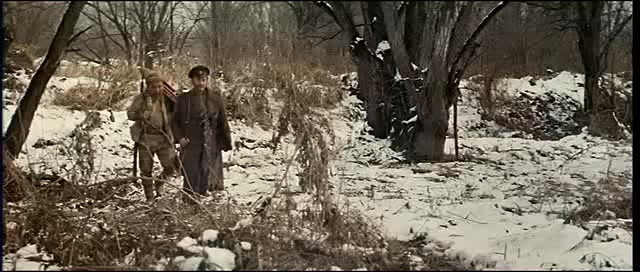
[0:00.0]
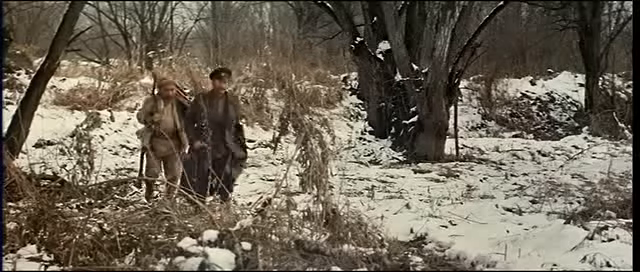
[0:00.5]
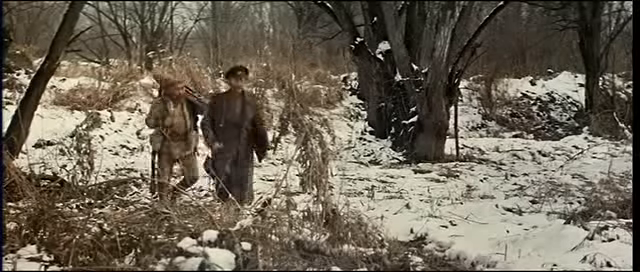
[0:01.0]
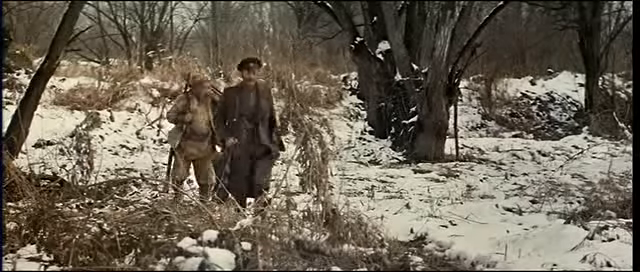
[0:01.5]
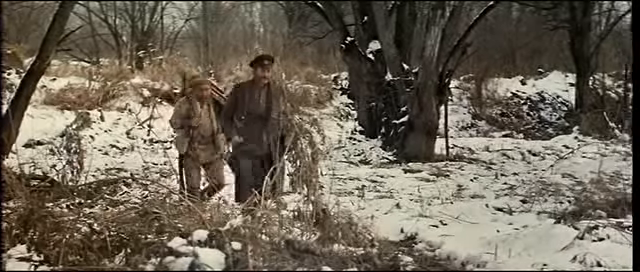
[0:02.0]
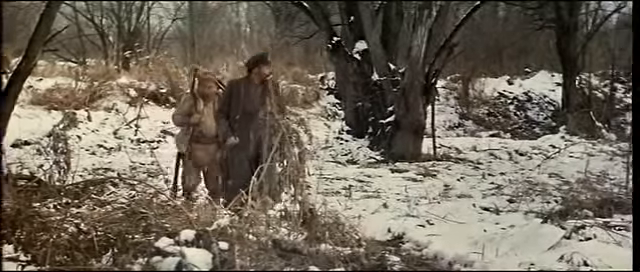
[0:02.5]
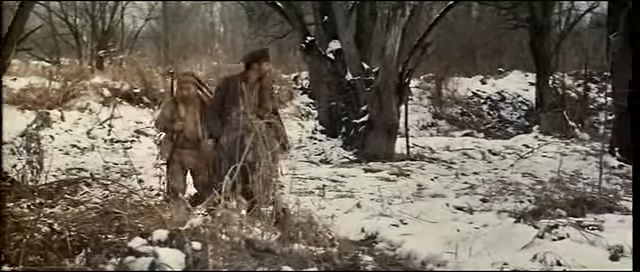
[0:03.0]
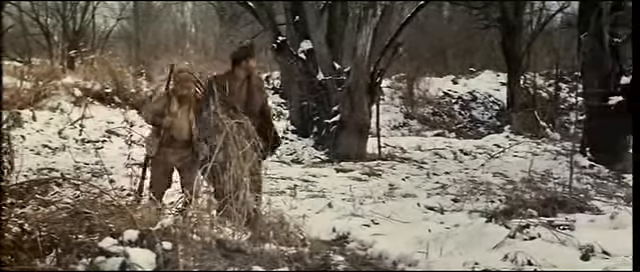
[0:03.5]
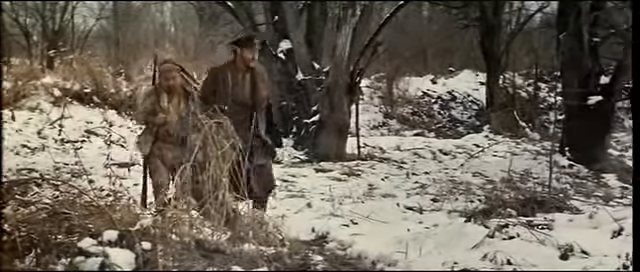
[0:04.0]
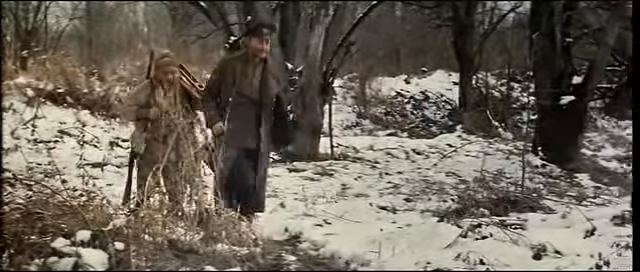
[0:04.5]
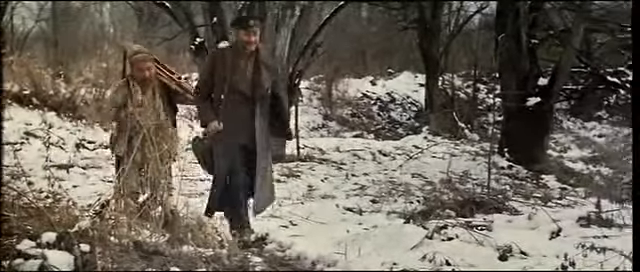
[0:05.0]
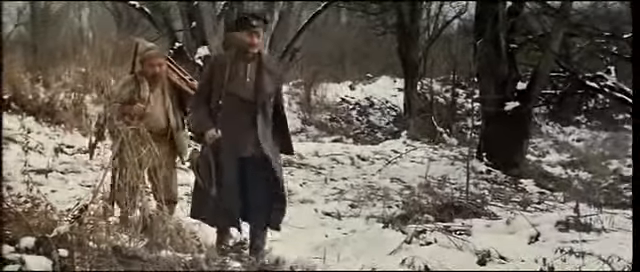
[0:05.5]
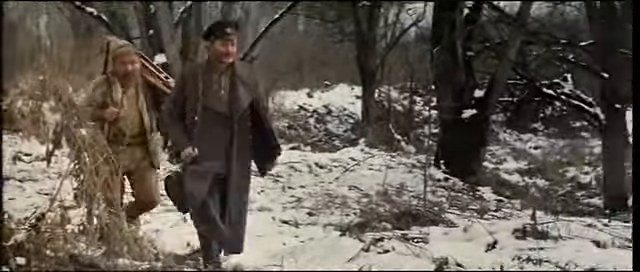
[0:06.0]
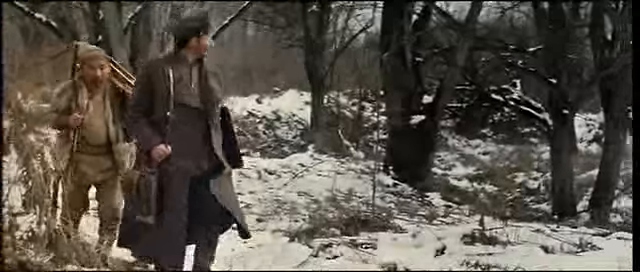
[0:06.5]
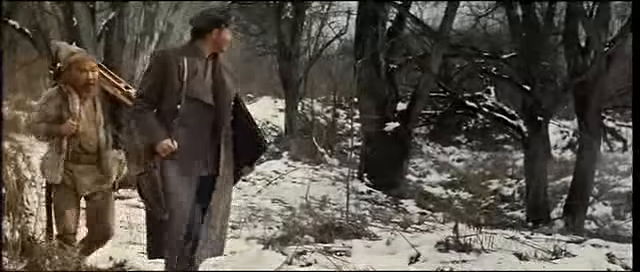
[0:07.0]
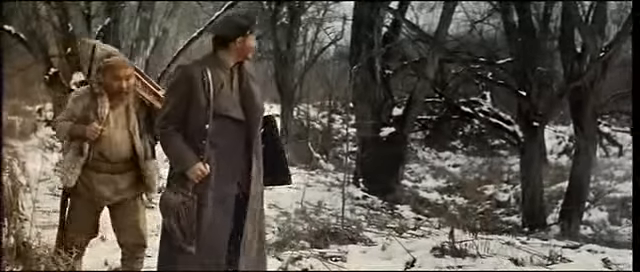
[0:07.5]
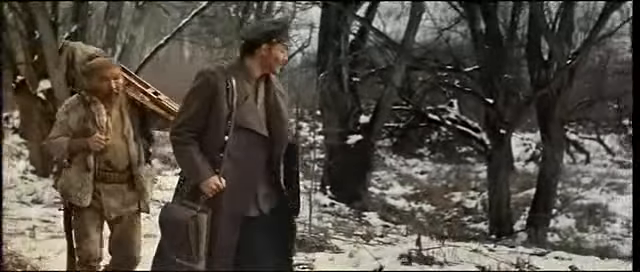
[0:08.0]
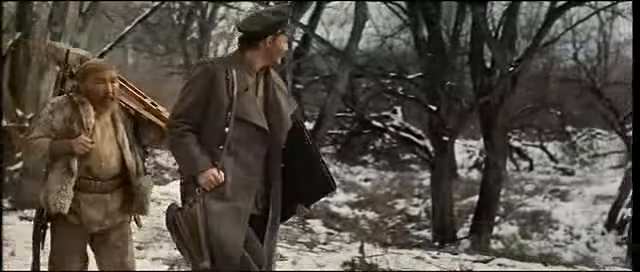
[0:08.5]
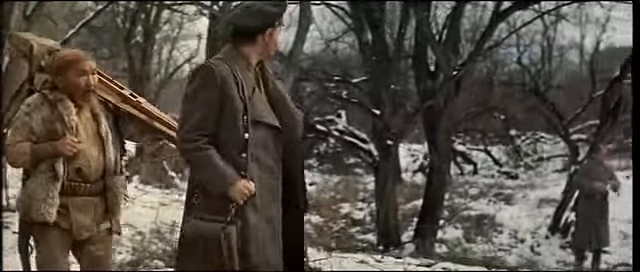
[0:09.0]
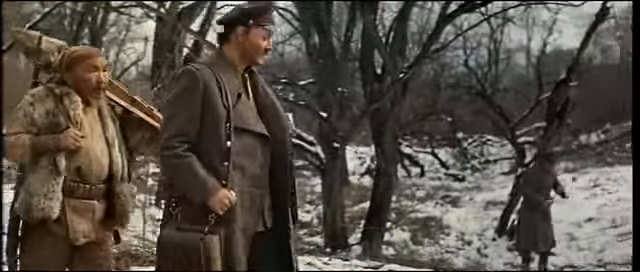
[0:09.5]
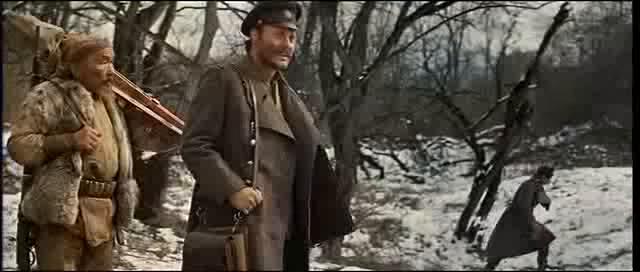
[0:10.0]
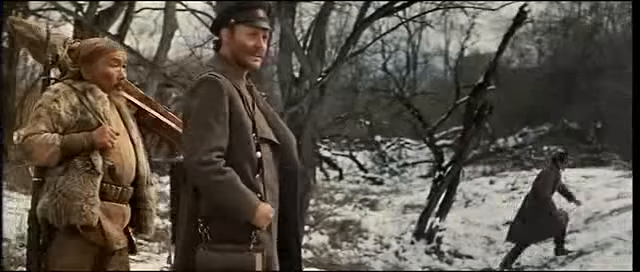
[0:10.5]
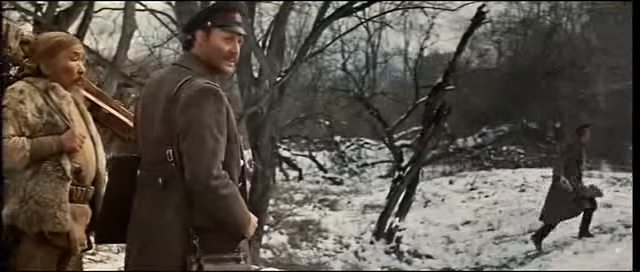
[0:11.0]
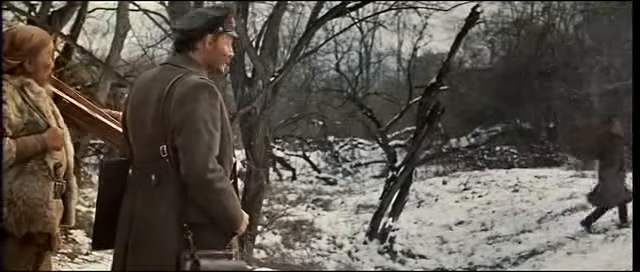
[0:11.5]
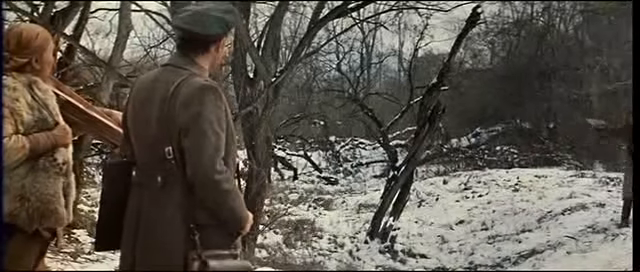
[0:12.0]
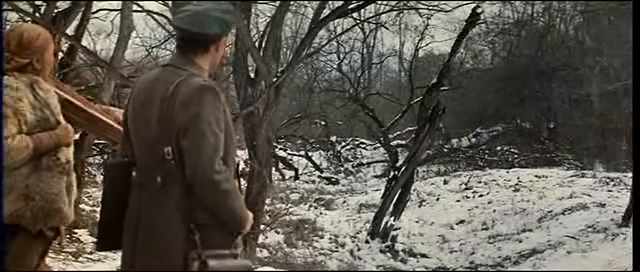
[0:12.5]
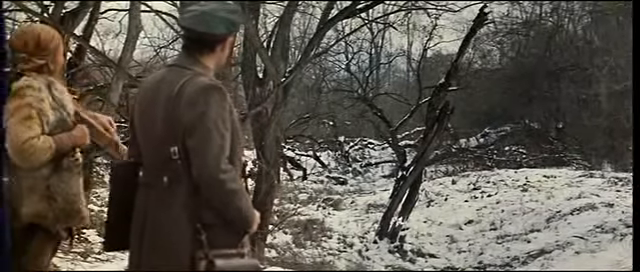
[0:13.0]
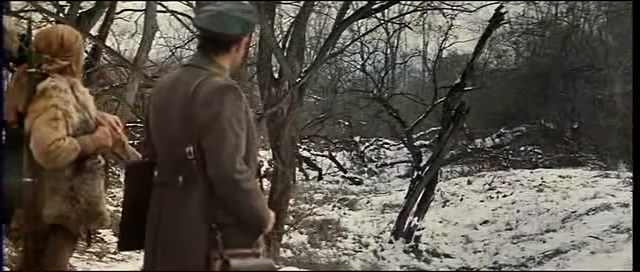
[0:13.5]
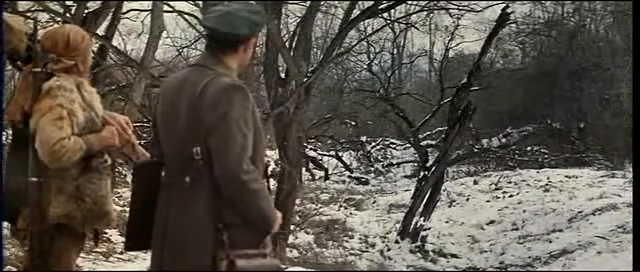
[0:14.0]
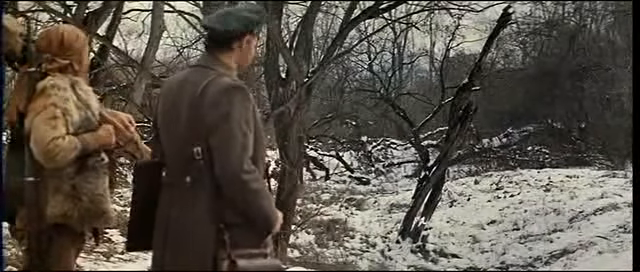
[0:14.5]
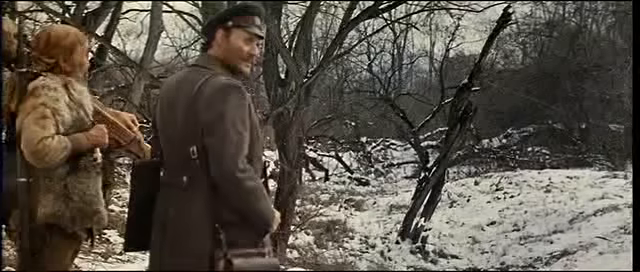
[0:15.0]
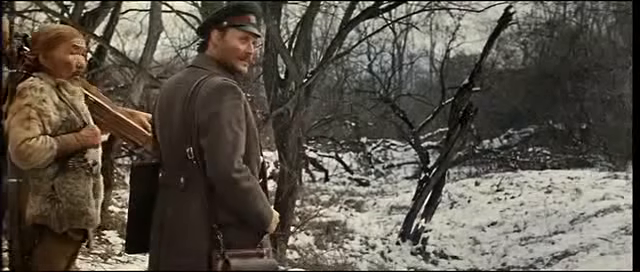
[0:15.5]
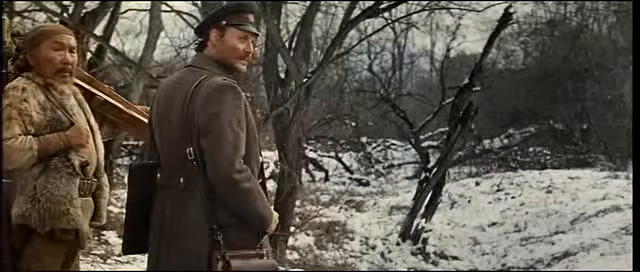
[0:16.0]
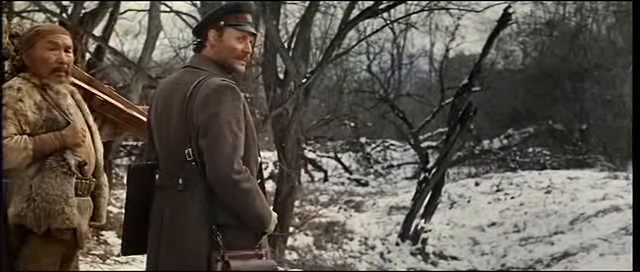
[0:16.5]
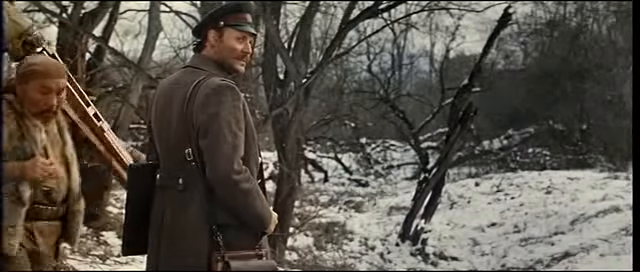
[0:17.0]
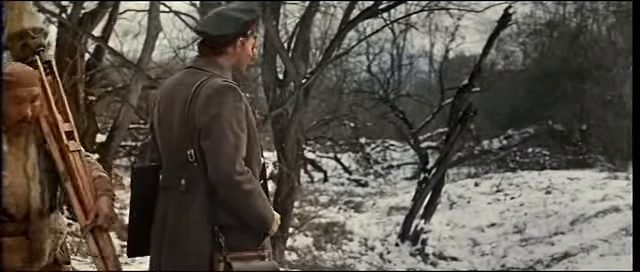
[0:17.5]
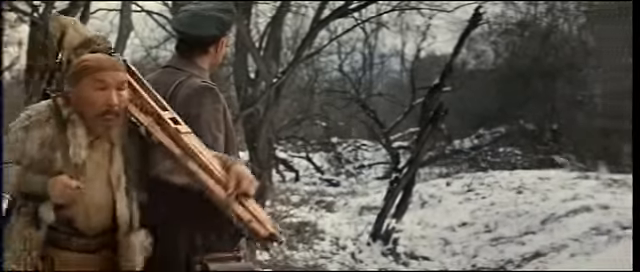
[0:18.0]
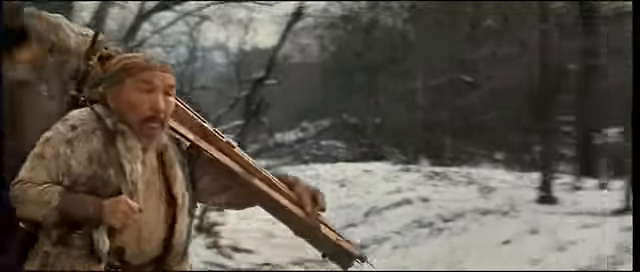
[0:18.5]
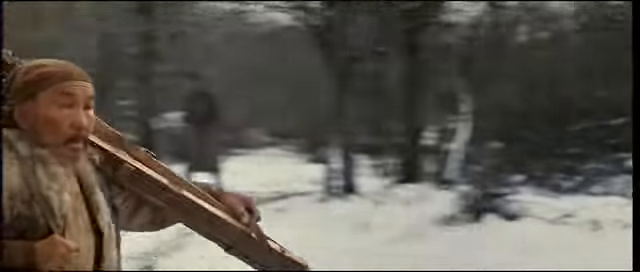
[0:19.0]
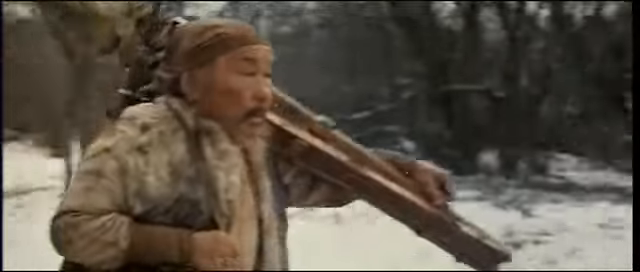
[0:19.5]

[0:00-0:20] The setting appears to be a snowy mountain, with a thick layer of snow covering the area so that only white is visible on the ground. There are quite a few trees with no vegetation on them and some dry grass. Two people walk through the scene. One appears to be dressed in a more uniform manner, in a long brown coat and a hat; the other appears to be dressed more like a slave, in ragged clothes, and looks like a shorter Asian person. The first man looks like he might be some sort of European and is clearly white. They stop walking when they see another person far away on the snowy mountain. The focus then moves to the Asian man, who is apparently also getting some wood, and he starts running from the left, where they came from, toward the right.